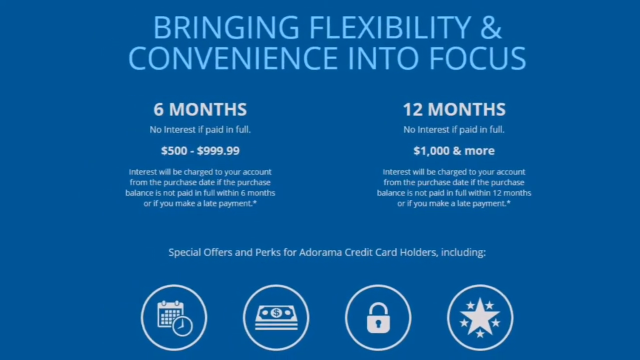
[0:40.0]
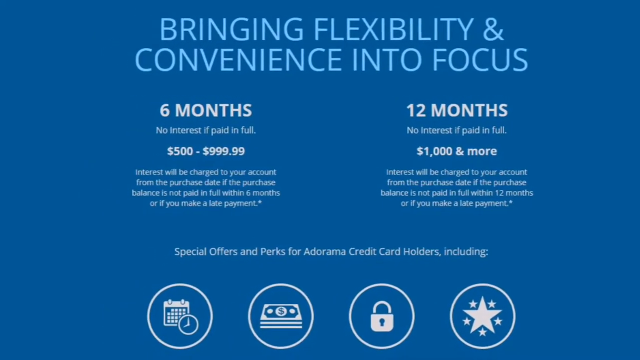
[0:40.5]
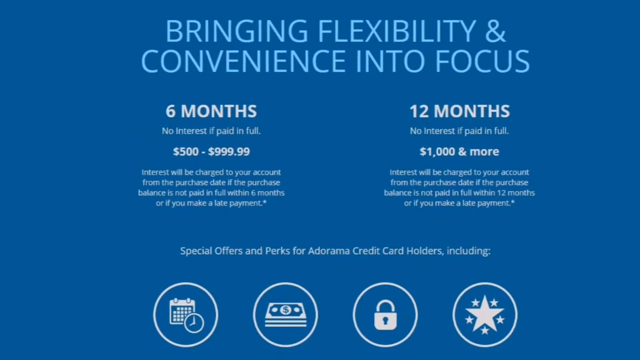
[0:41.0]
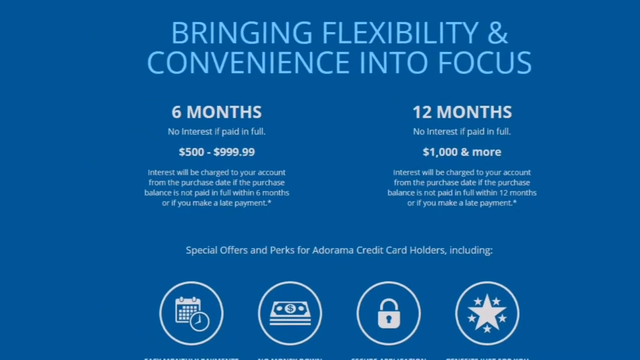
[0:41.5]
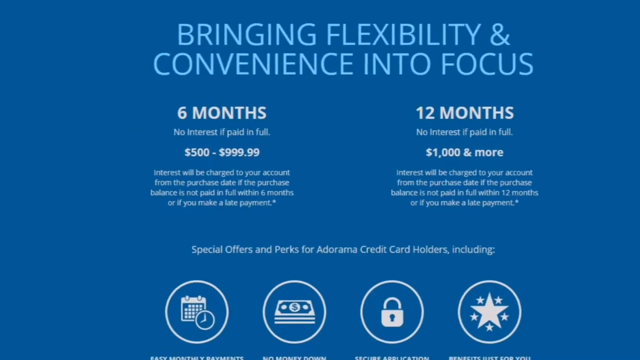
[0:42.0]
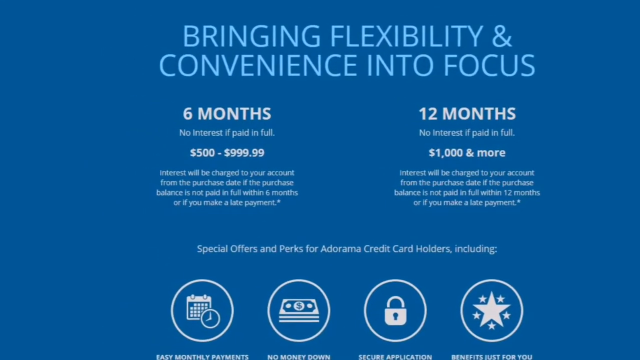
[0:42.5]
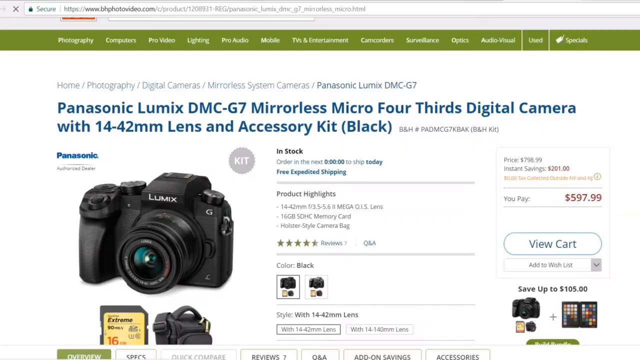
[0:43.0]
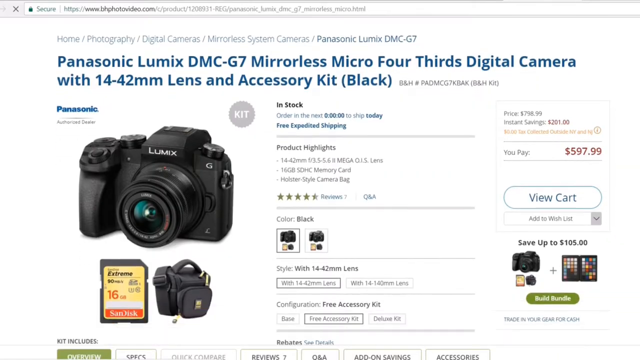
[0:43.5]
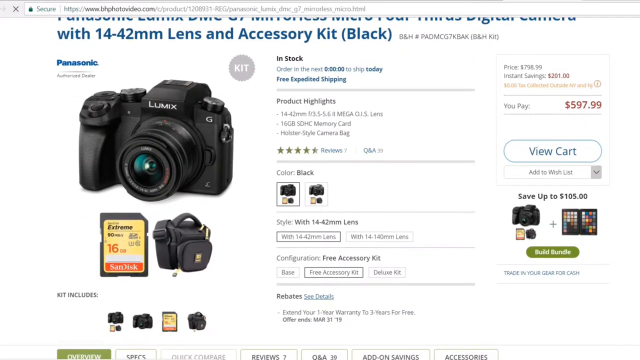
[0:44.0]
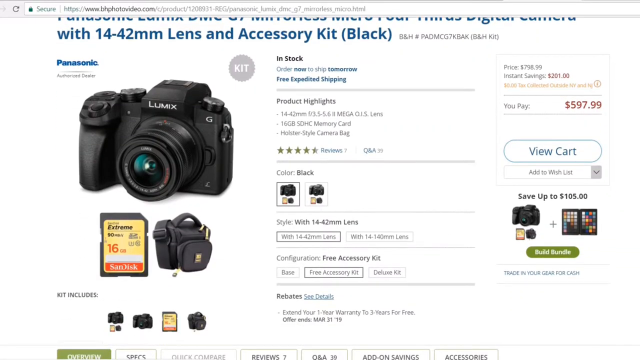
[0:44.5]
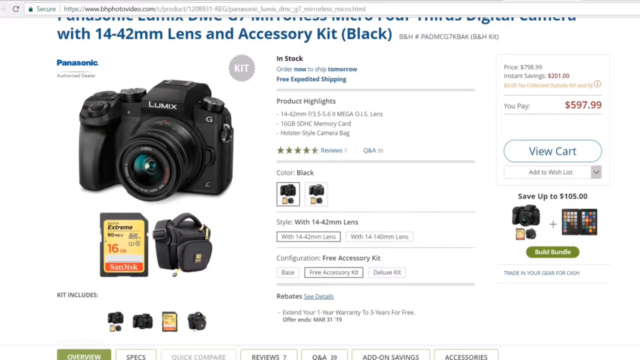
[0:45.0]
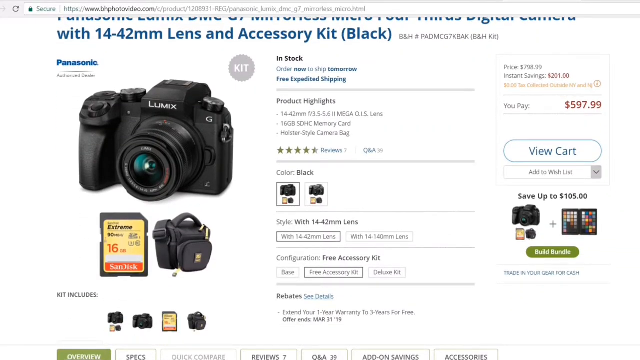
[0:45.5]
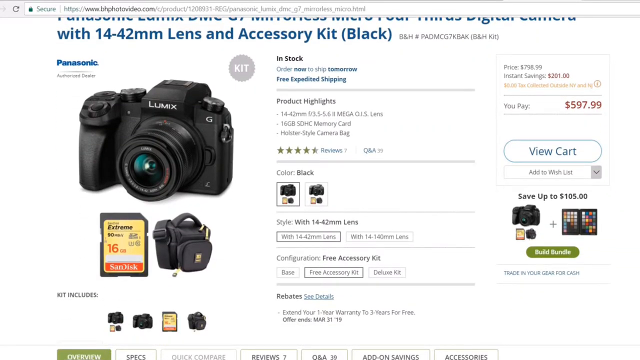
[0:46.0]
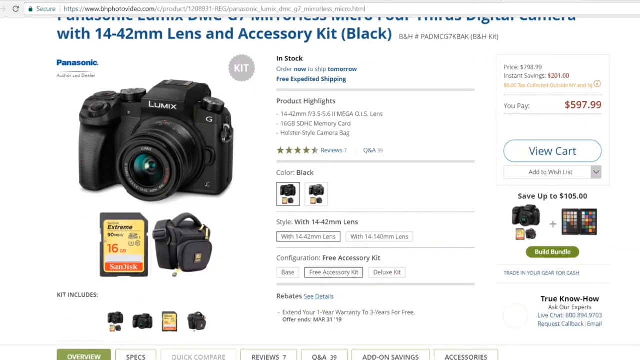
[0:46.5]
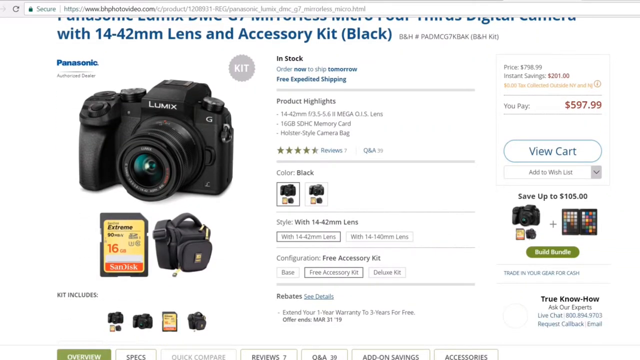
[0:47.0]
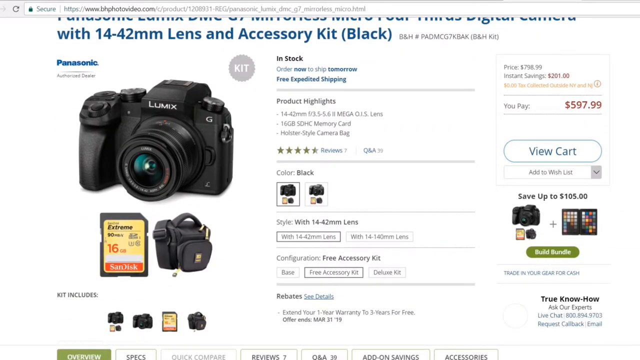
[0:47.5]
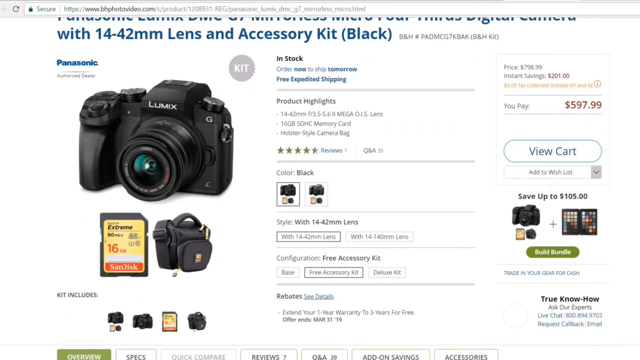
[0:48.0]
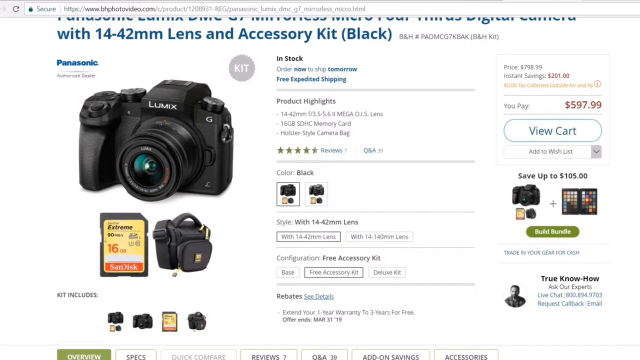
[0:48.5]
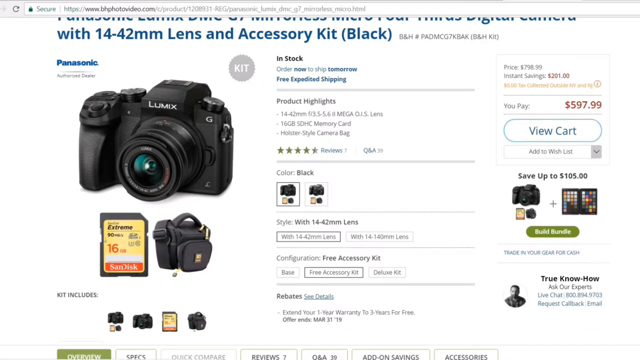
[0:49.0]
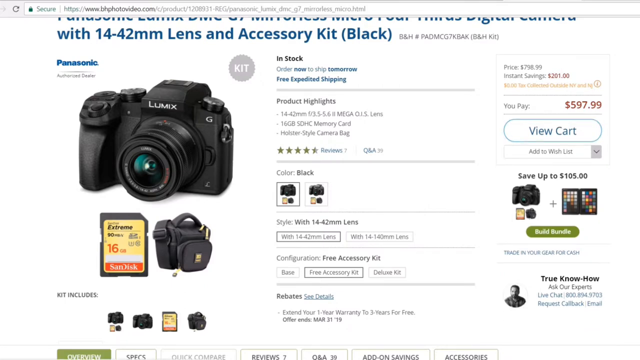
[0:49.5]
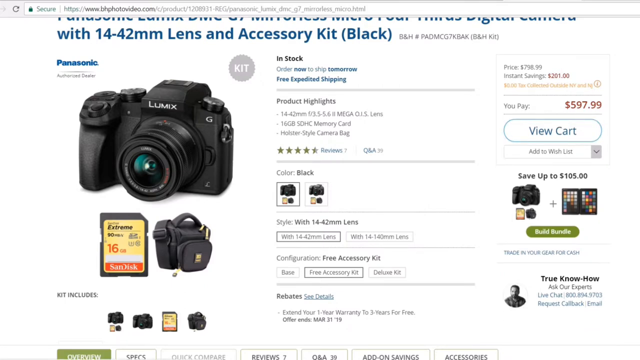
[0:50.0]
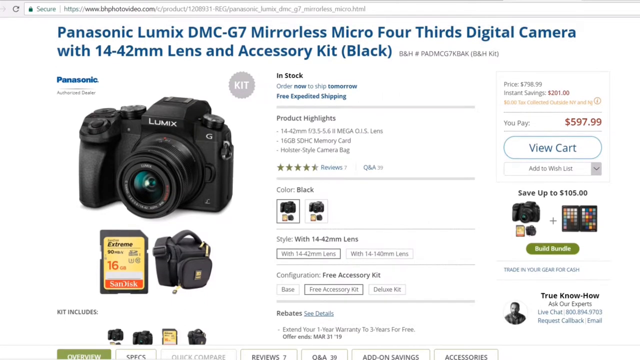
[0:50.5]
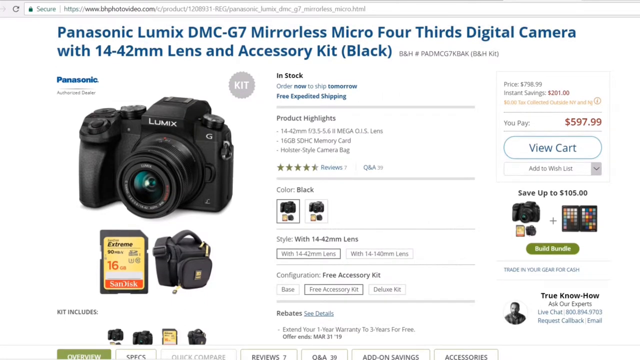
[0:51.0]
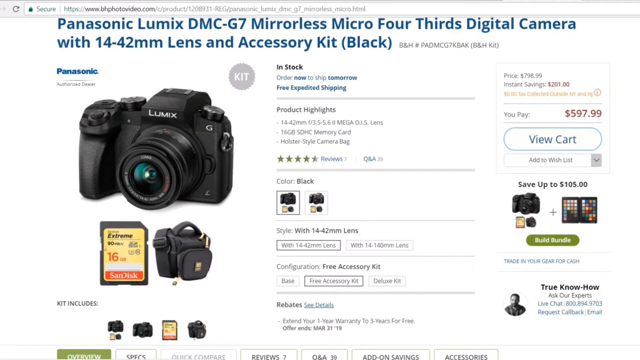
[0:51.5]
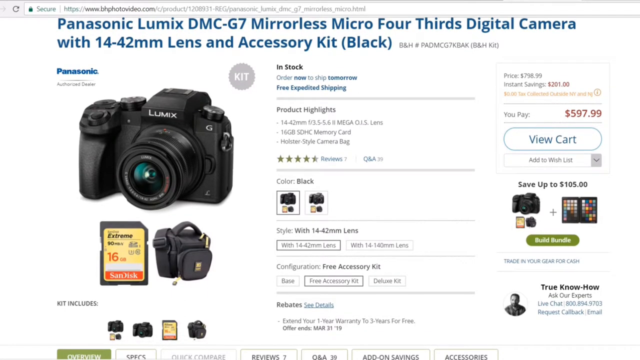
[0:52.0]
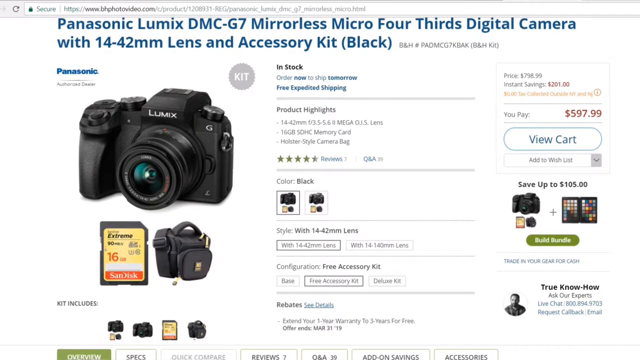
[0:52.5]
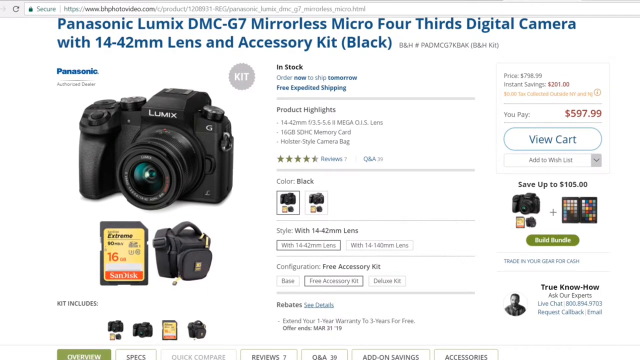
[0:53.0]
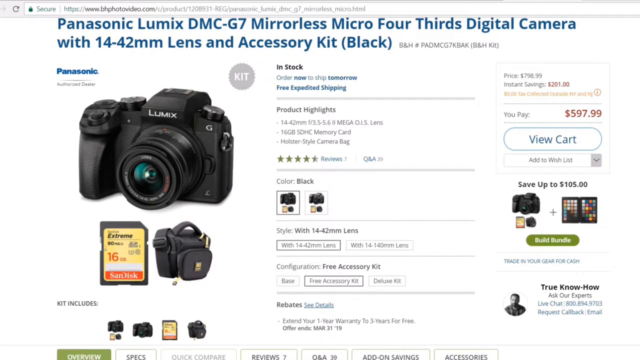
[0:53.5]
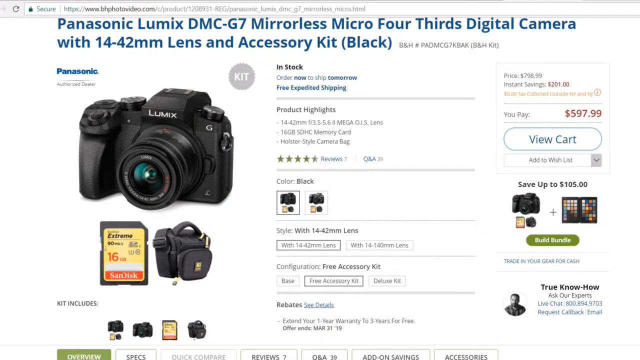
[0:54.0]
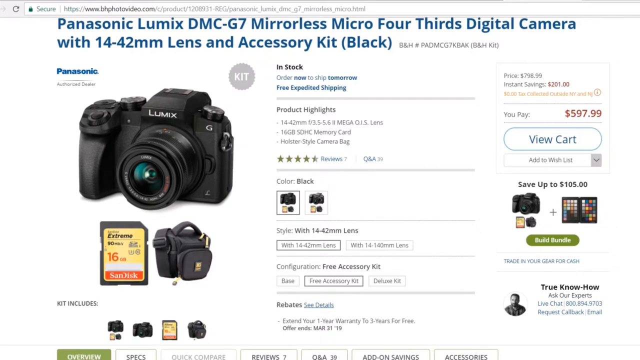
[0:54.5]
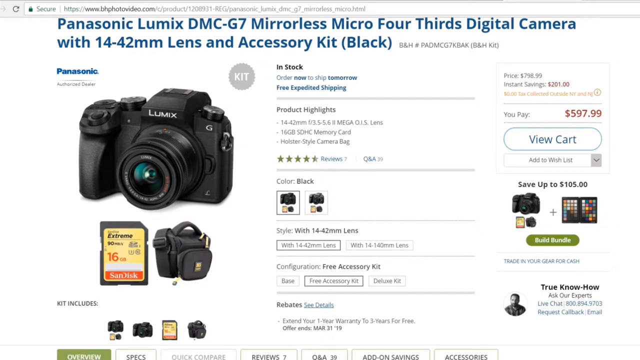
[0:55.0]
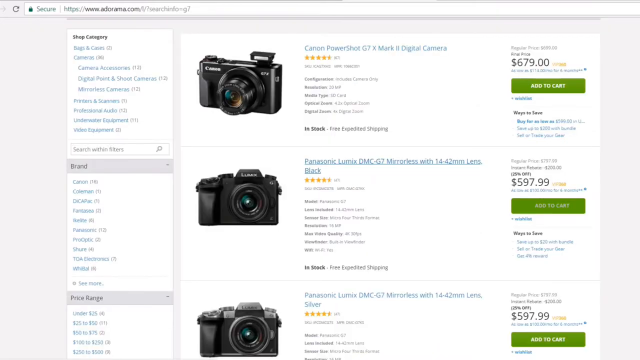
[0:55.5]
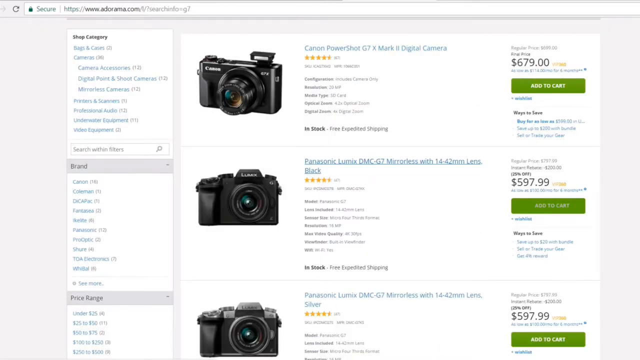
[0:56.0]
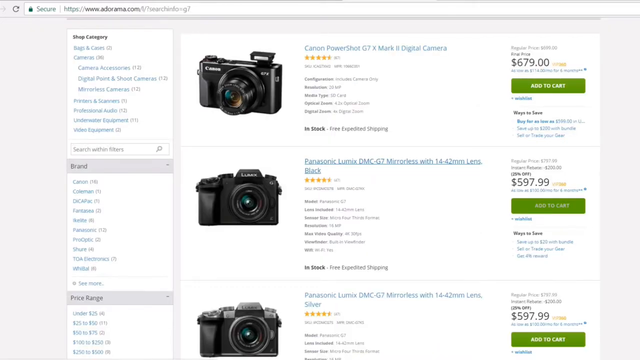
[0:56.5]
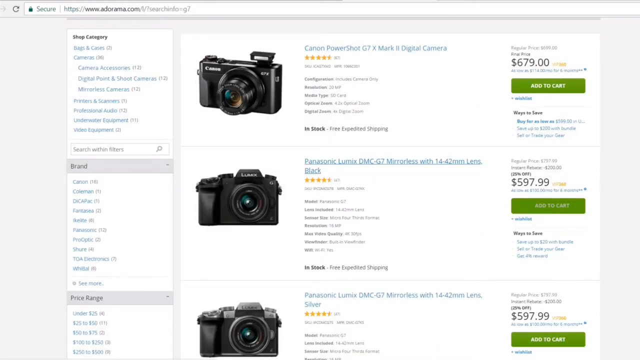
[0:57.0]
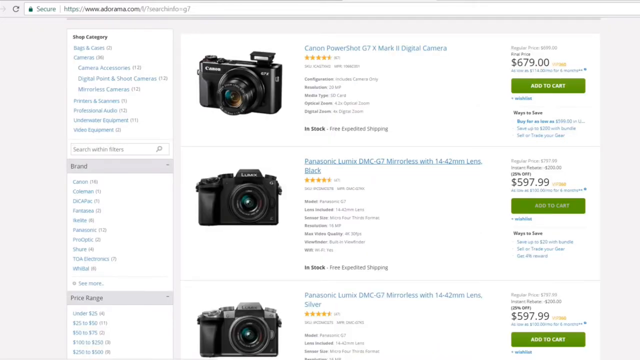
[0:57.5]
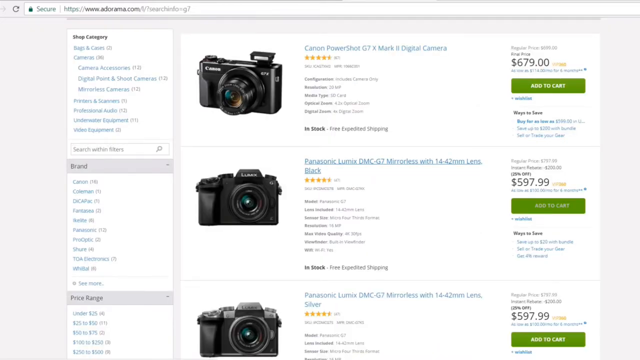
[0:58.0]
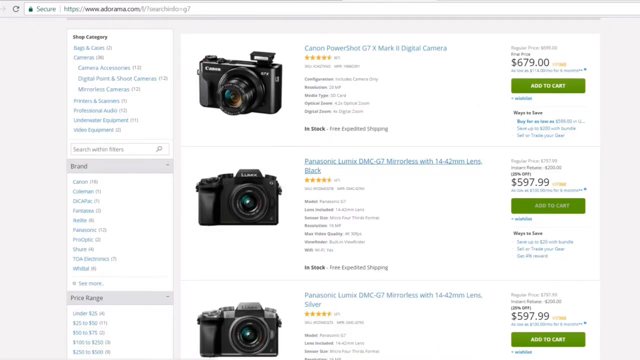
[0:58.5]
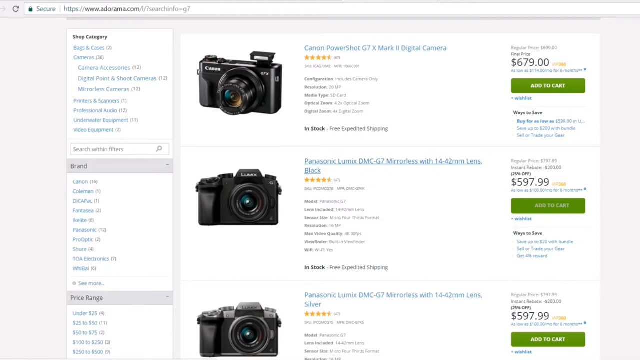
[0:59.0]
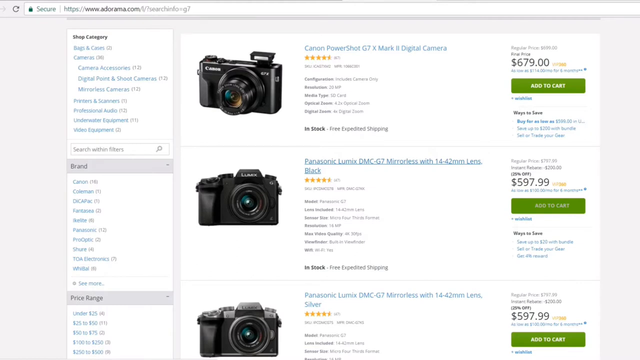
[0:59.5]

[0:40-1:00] The blue screen describing flexible payment options continues, with its two columns, one for six months and one for 12 months, and details highlighted underneath each column. Beneath them are four icons. The video then transitions to a page featuring one product, a black Panasonic Lumix camera, with several details for the product, on what looks like a generic retailer website selling professional cameras and photography equipment. It then moves to a page showing more cameras with the same features.